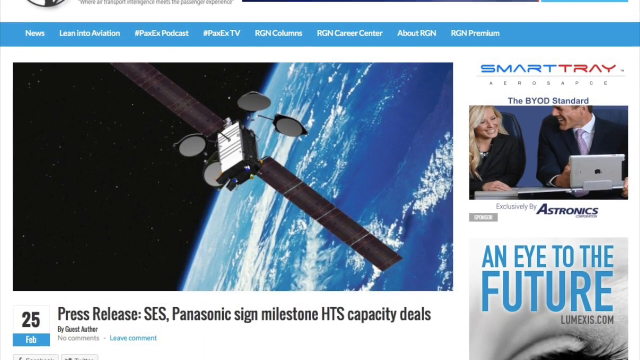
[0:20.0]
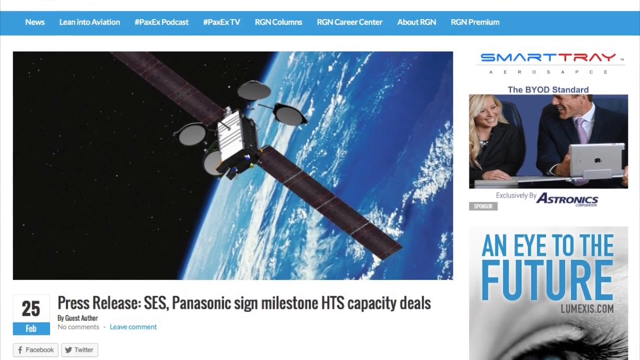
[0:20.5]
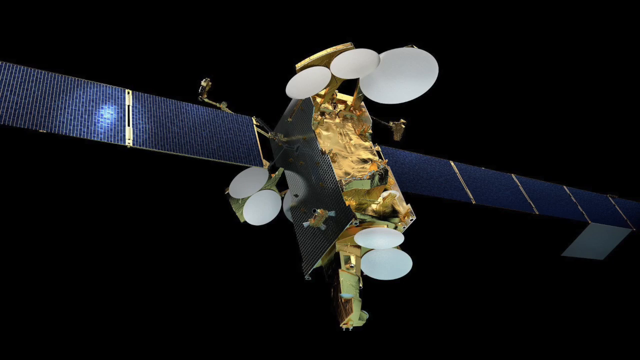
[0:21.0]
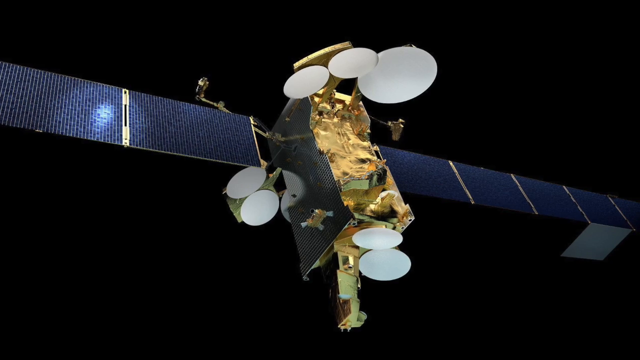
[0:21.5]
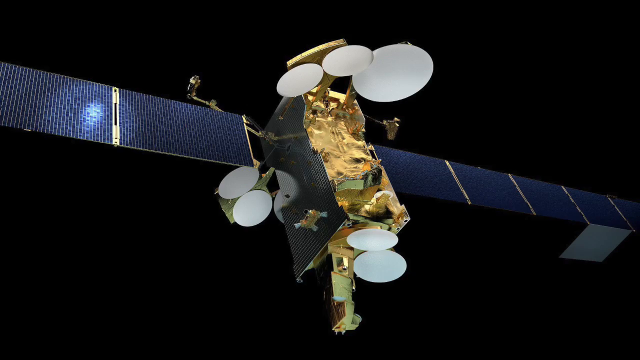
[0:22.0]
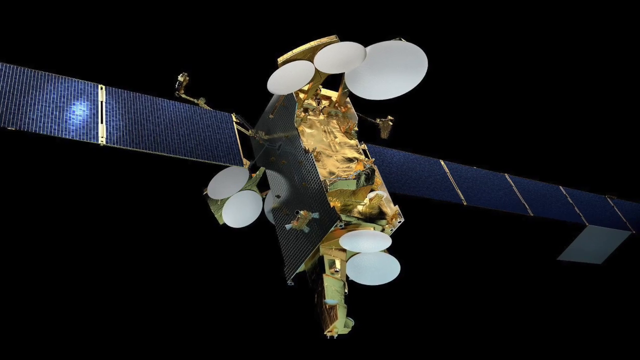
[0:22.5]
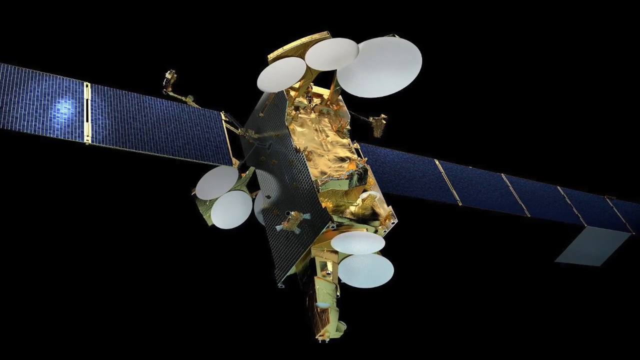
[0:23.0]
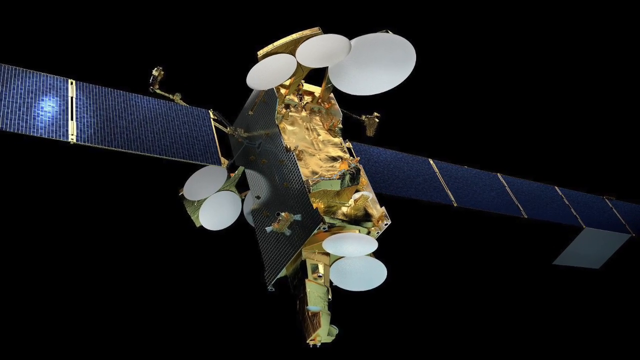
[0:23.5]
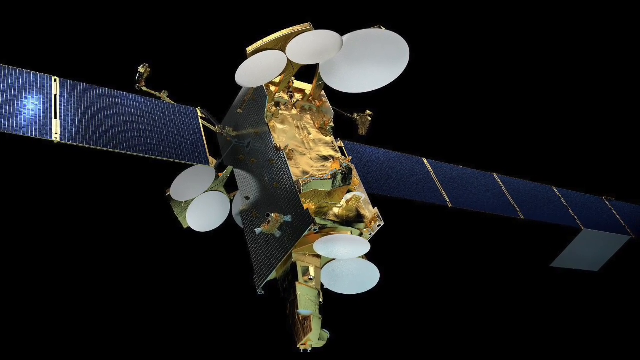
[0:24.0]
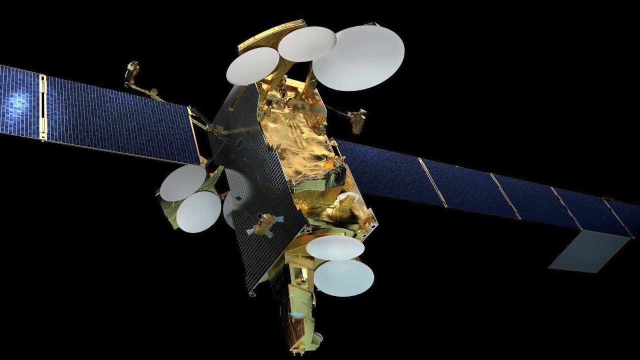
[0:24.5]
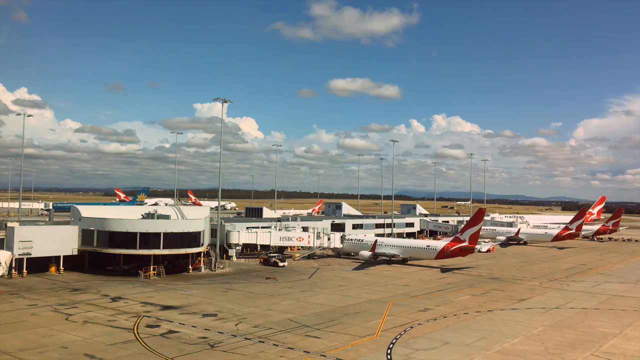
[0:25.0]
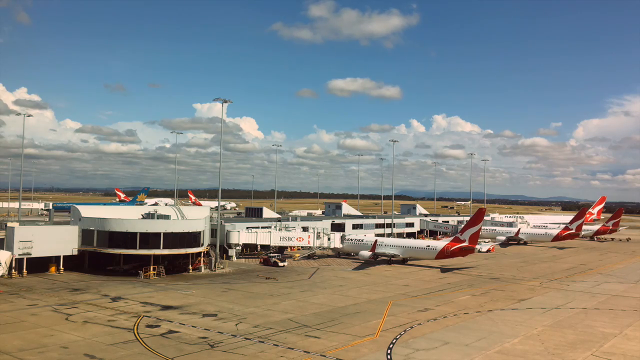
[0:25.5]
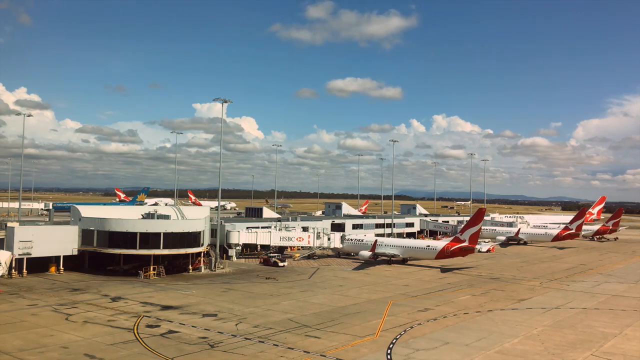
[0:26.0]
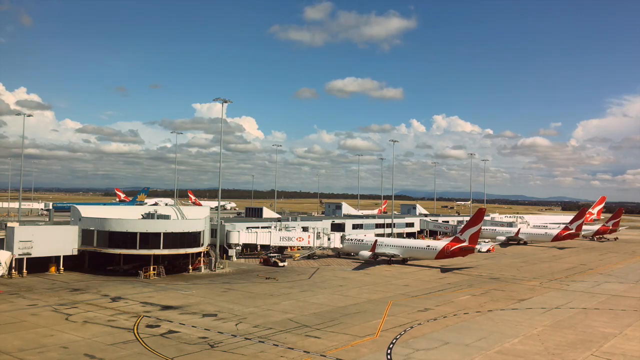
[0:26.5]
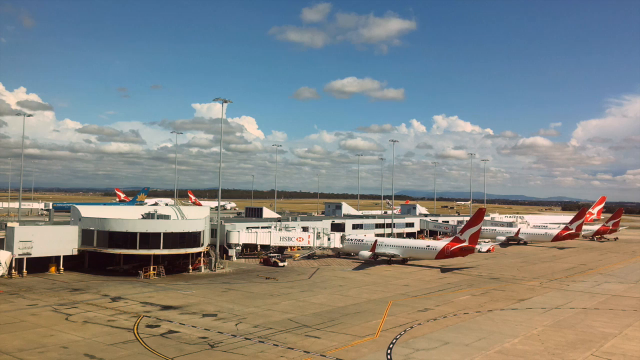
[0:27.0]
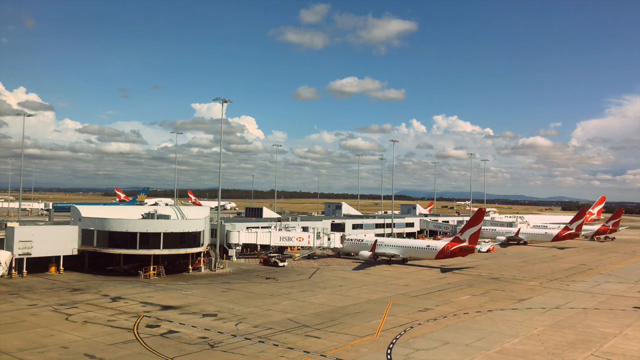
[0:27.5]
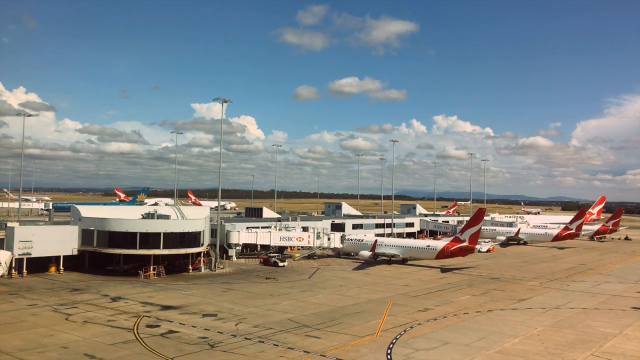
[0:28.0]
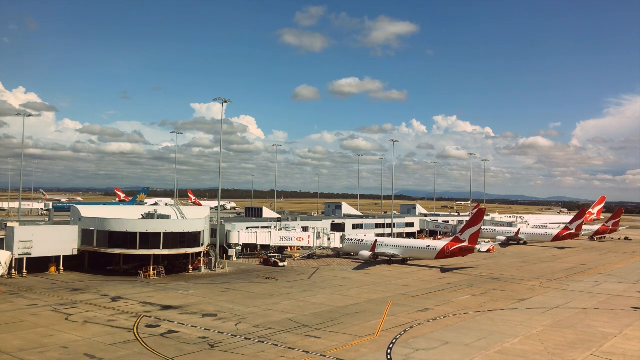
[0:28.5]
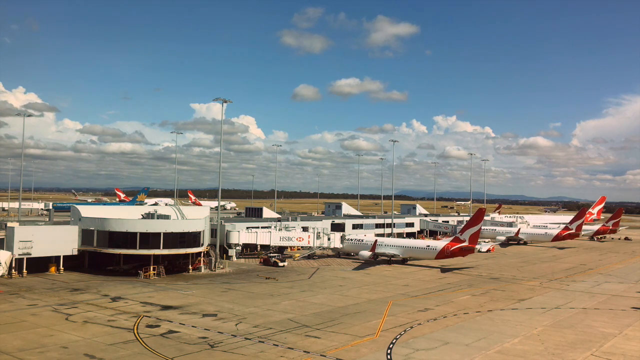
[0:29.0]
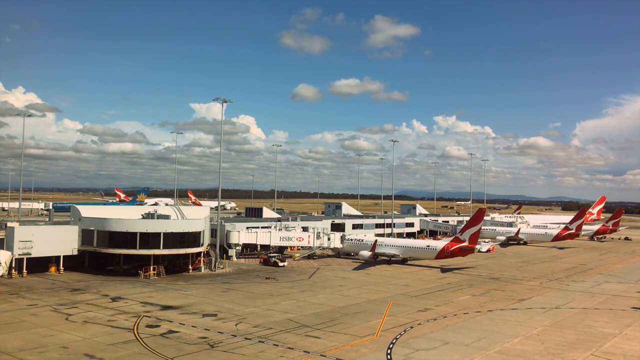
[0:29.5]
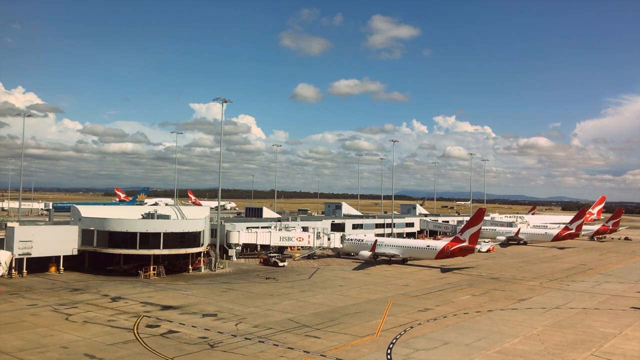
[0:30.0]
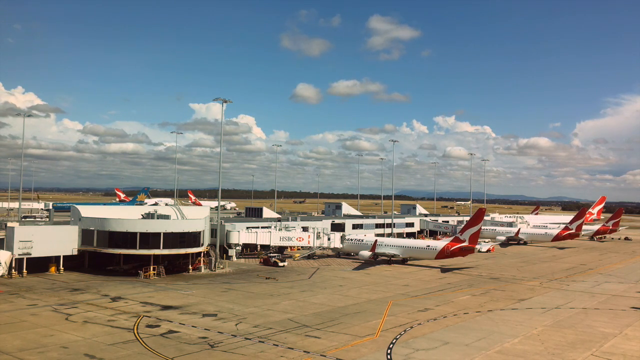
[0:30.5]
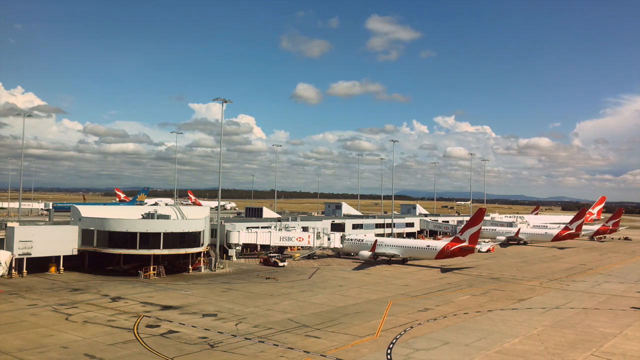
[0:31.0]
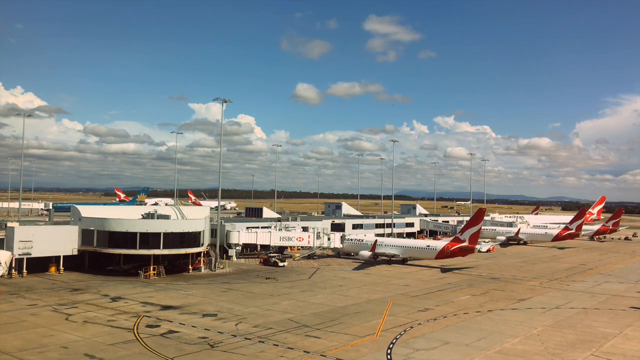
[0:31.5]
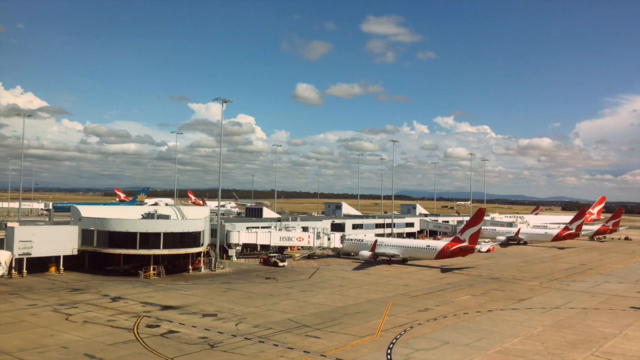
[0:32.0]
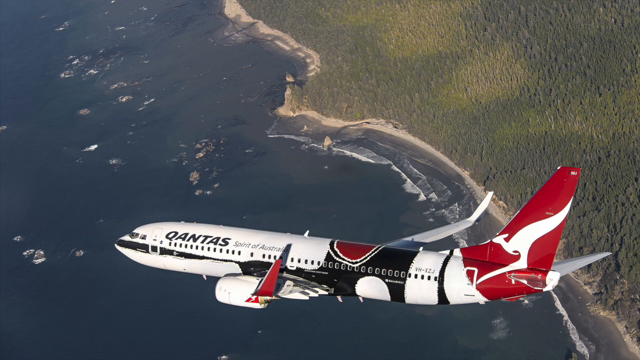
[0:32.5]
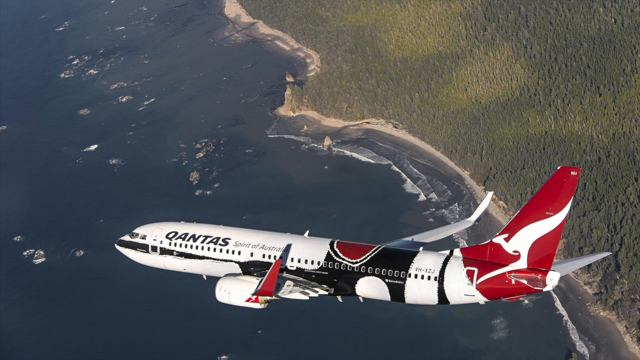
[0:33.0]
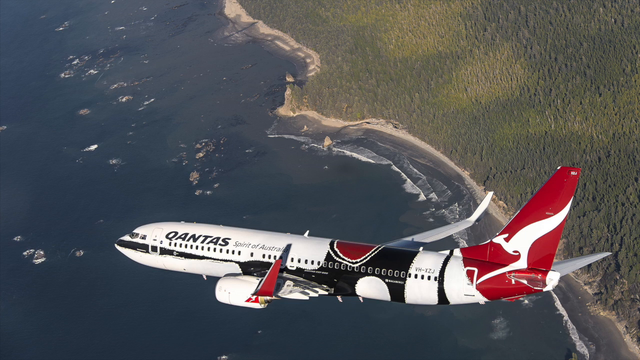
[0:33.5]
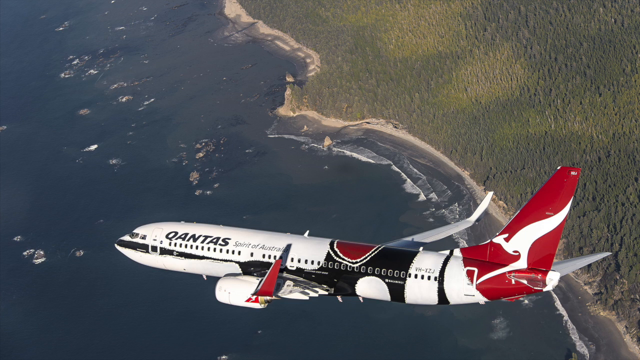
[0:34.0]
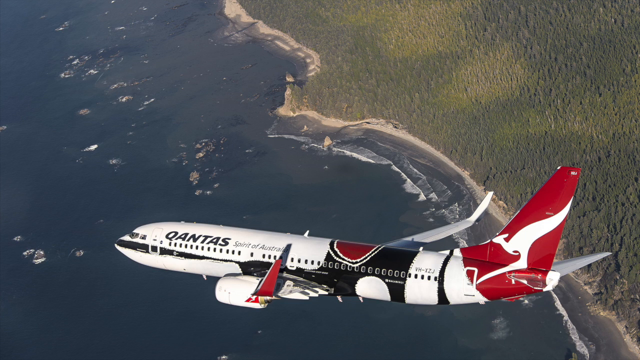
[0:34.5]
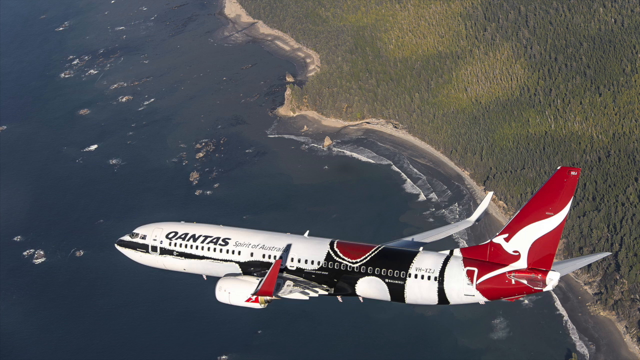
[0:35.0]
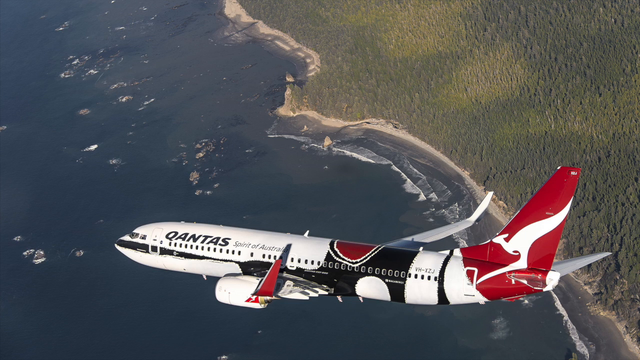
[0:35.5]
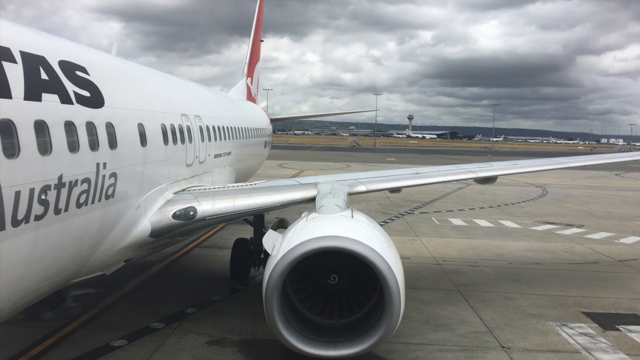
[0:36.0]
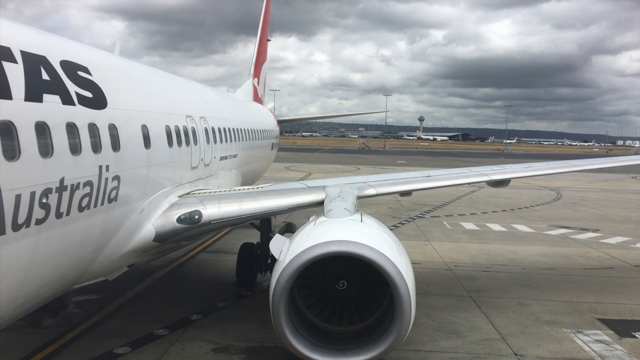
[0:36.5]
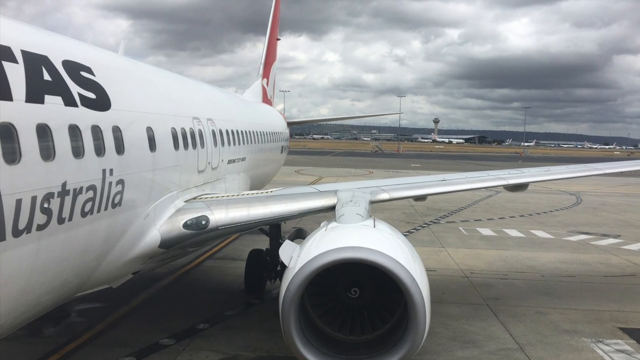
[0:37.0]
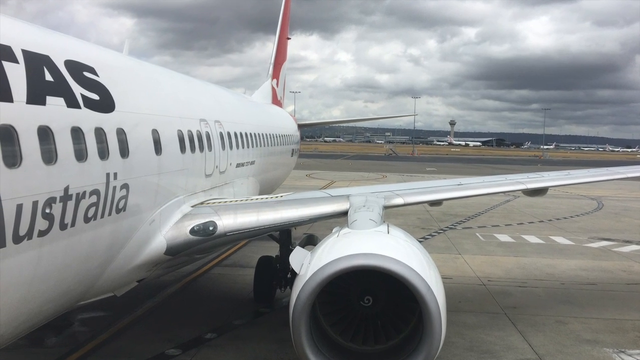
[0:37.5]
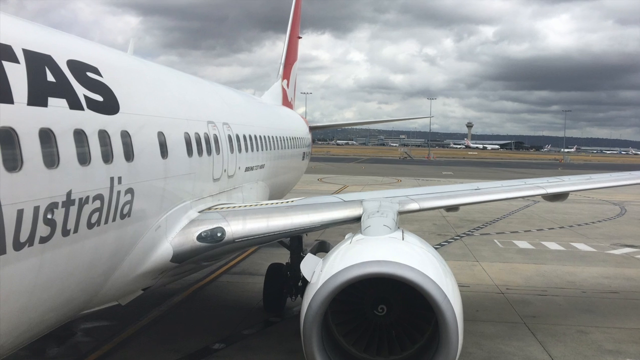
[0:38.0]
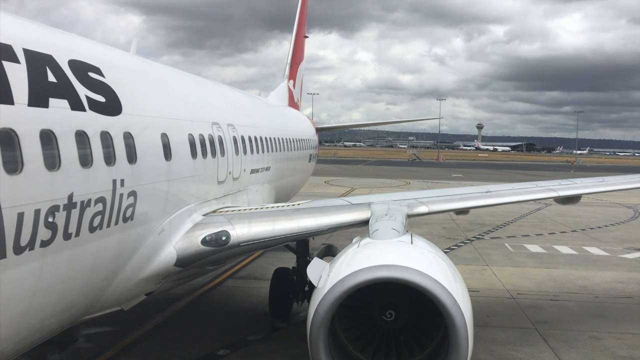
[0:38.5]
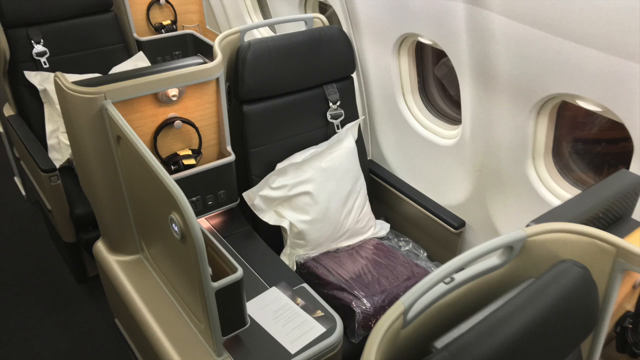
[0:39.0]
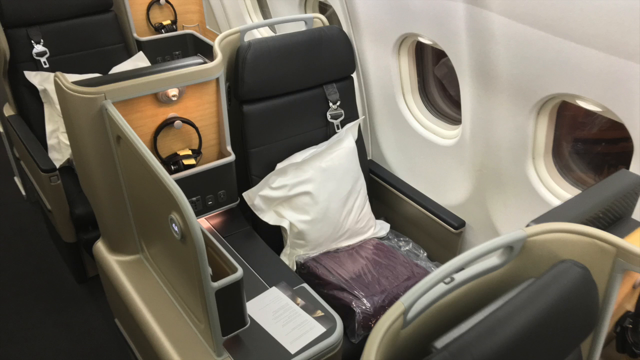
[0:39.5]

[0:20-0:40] The scrolling continues down the satellite page of the website. It then cuts to a black screen with a satellite floating in space, and the camera pans to the right of the satellite. The scene cuts to an airport runway field where airplanes move back and forth along the runway in a slight high-speed time lapse. Next is an image of a plane bearing the brand Qantas Spirit of Australia, seen from above, with water and a lot of forest along the coast below it. The video then cuts to the side of an airplane and zooms into the side windows, followed by a cut inside the airplane showing one of the seats.